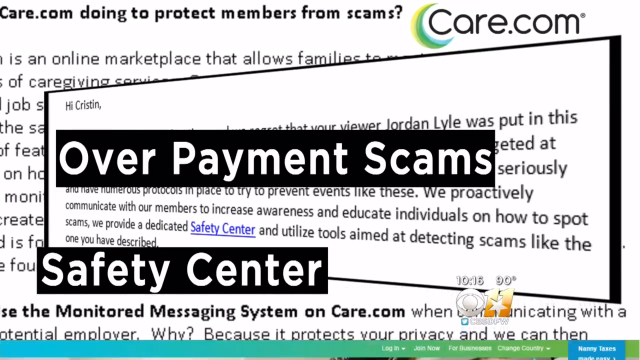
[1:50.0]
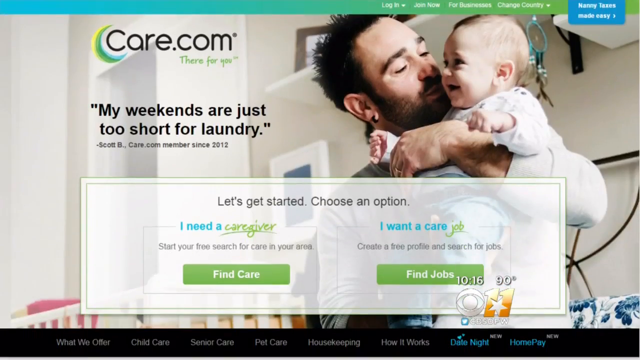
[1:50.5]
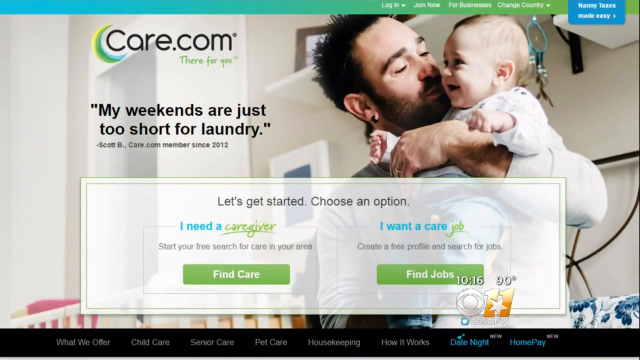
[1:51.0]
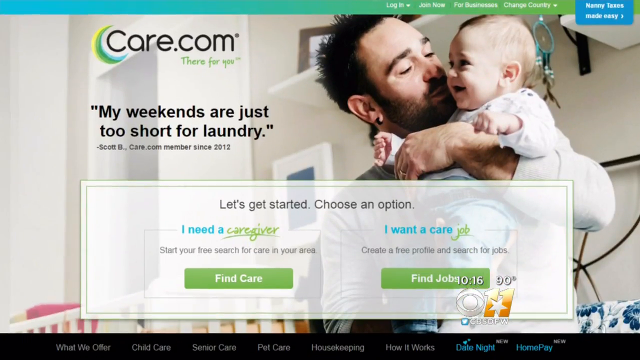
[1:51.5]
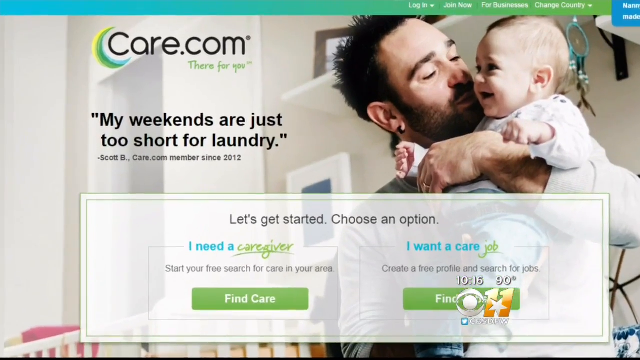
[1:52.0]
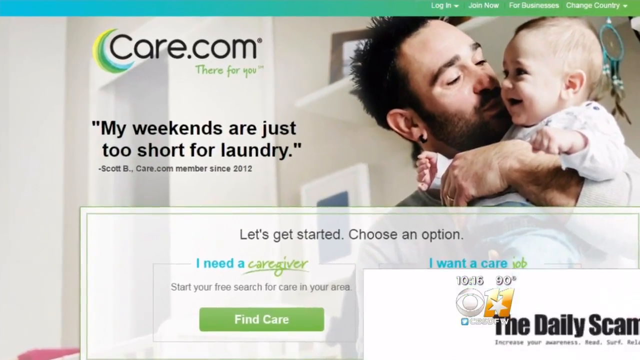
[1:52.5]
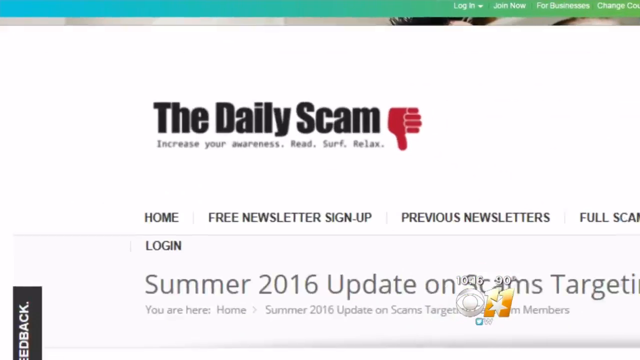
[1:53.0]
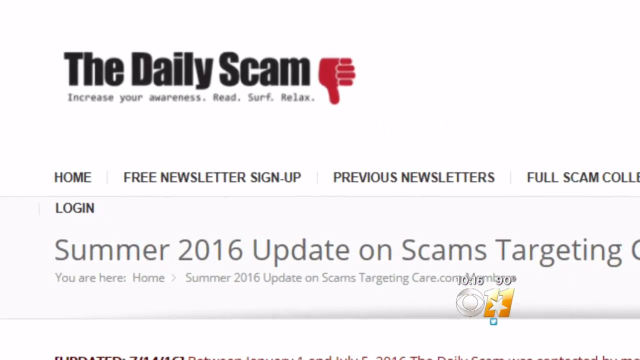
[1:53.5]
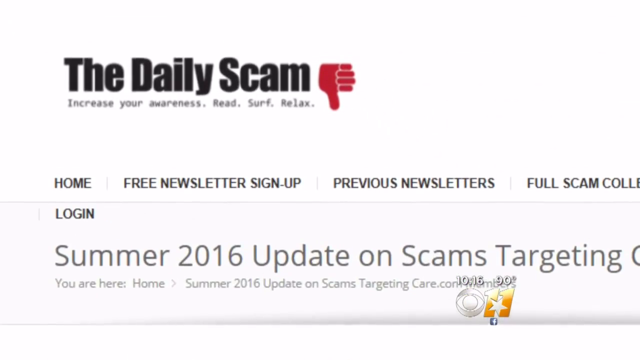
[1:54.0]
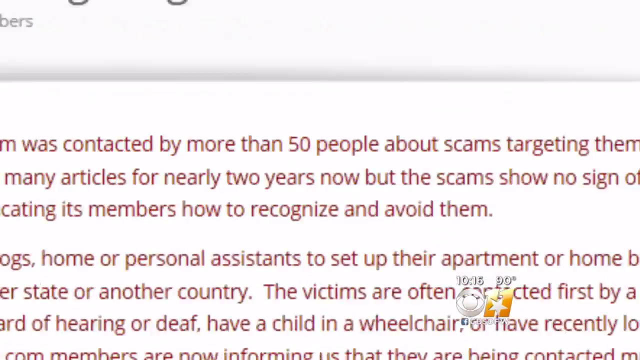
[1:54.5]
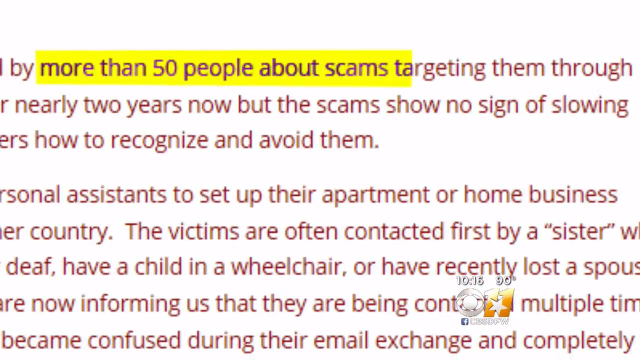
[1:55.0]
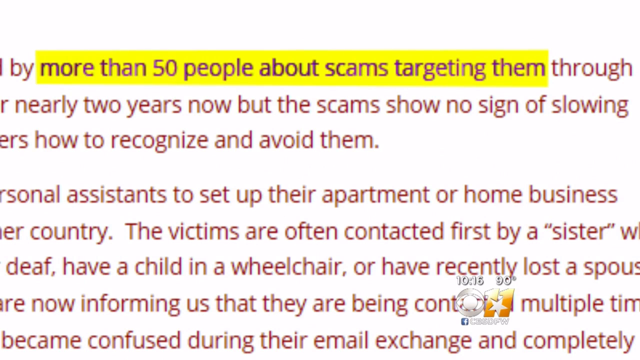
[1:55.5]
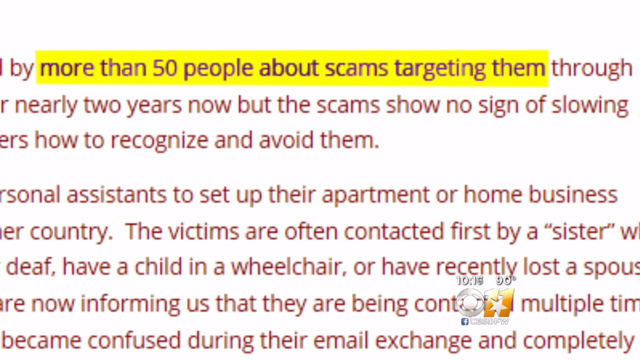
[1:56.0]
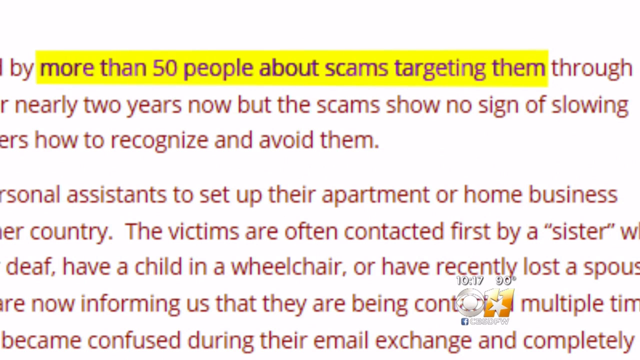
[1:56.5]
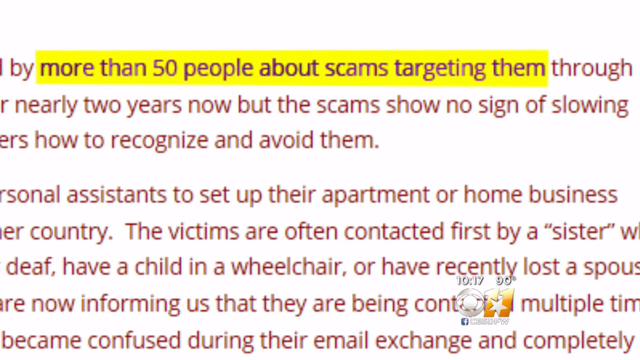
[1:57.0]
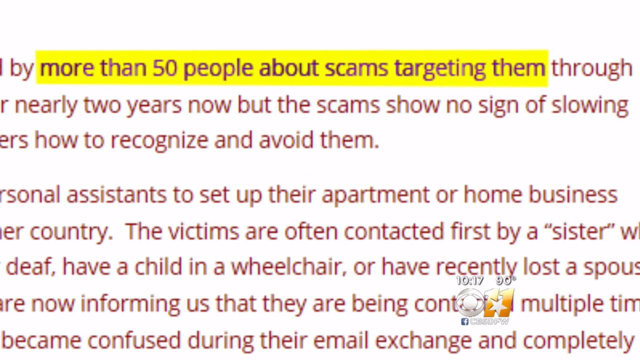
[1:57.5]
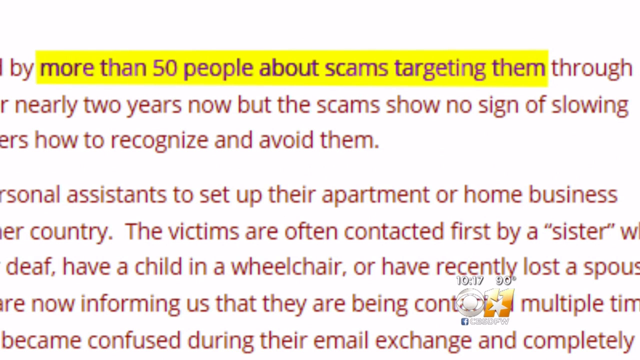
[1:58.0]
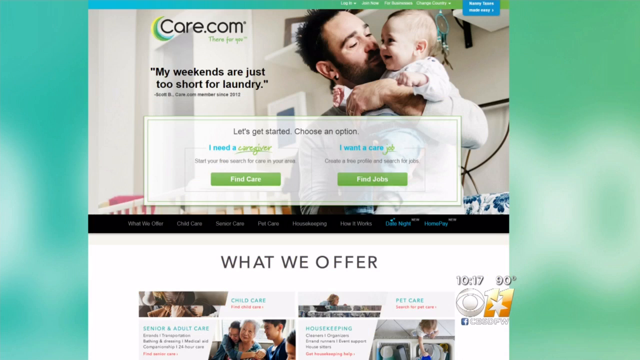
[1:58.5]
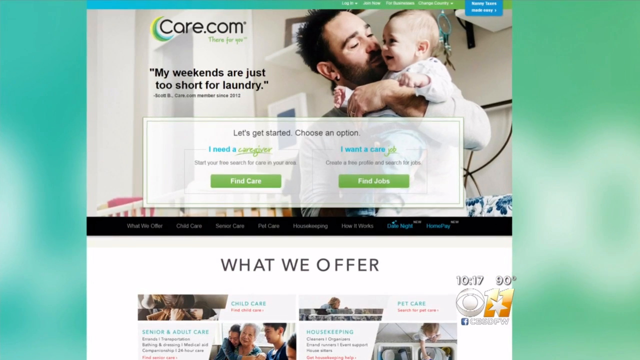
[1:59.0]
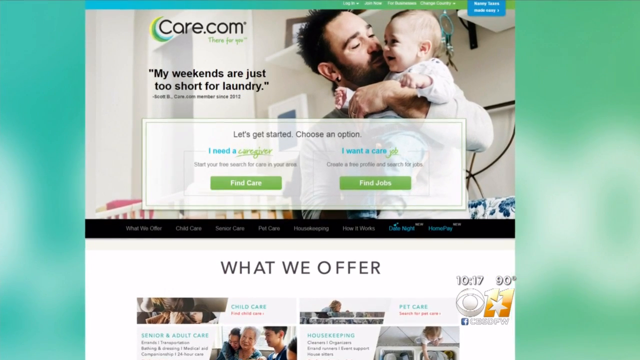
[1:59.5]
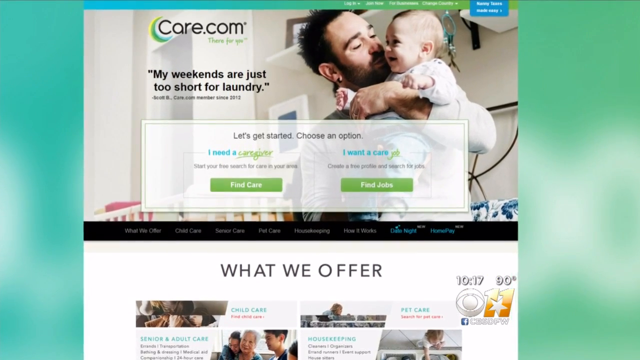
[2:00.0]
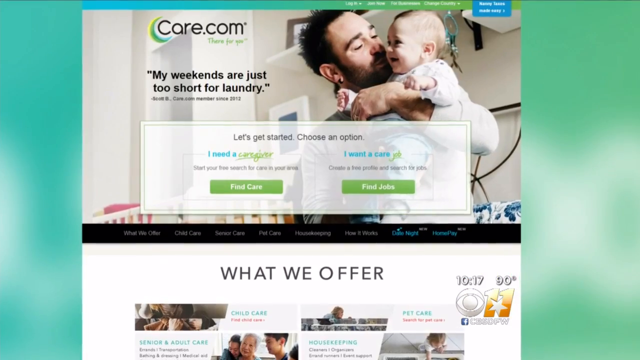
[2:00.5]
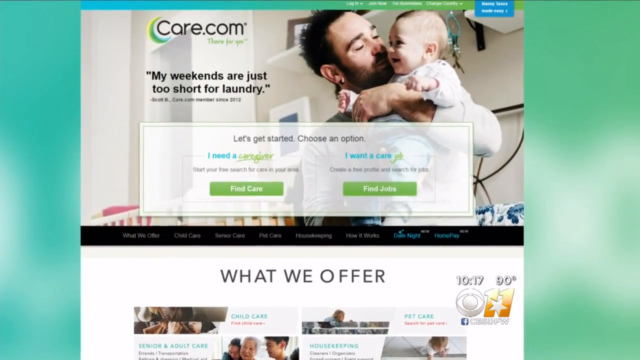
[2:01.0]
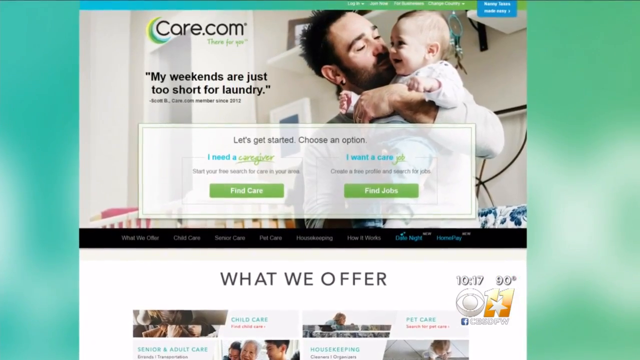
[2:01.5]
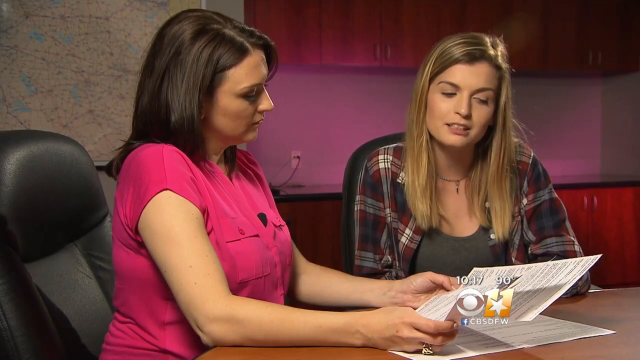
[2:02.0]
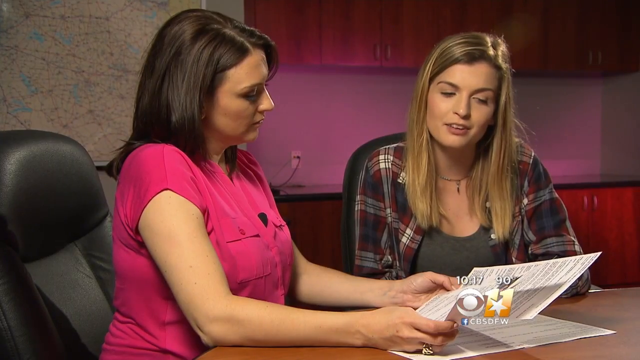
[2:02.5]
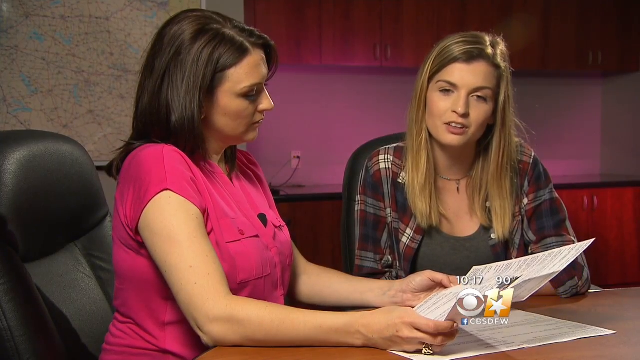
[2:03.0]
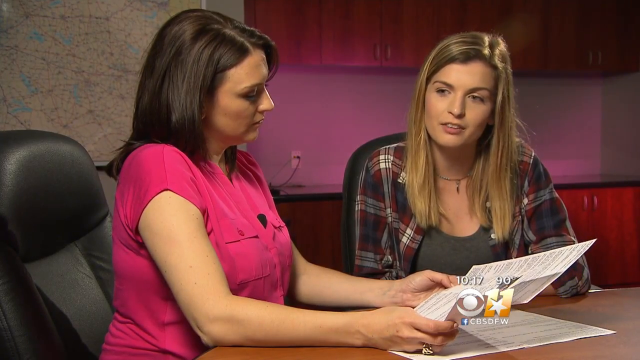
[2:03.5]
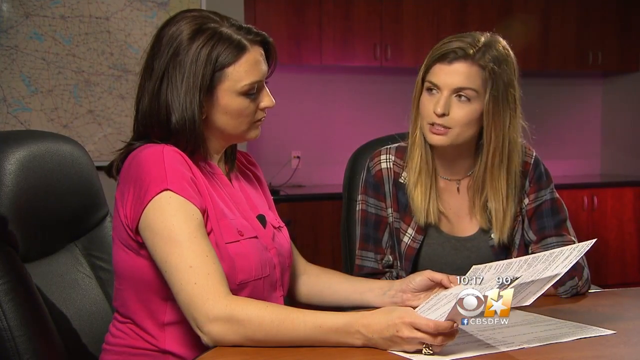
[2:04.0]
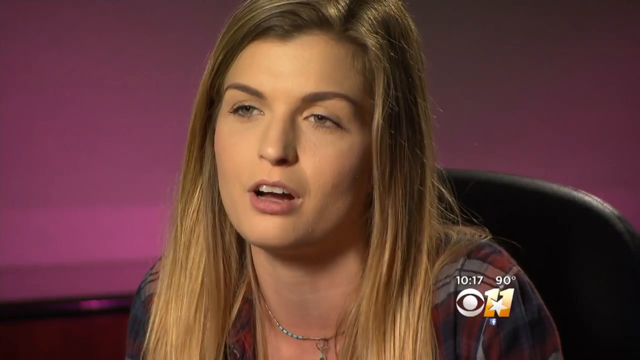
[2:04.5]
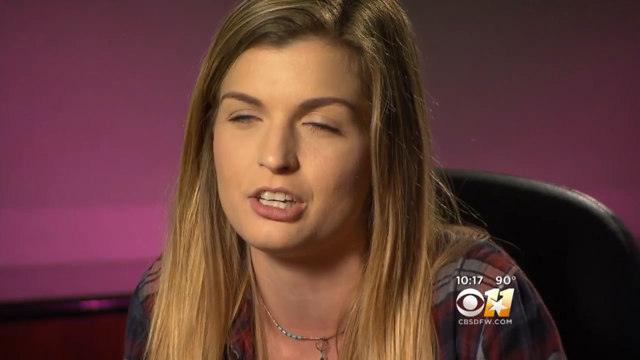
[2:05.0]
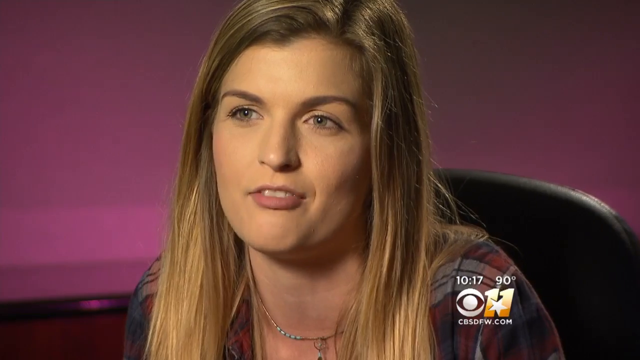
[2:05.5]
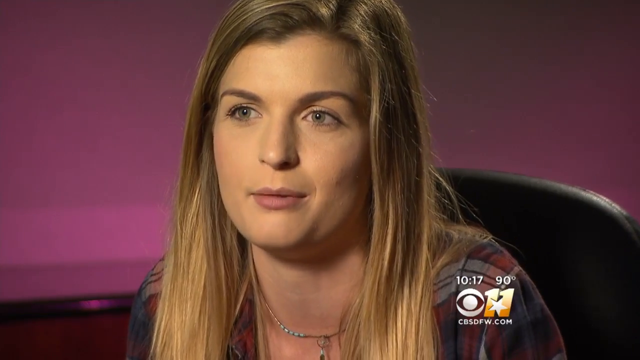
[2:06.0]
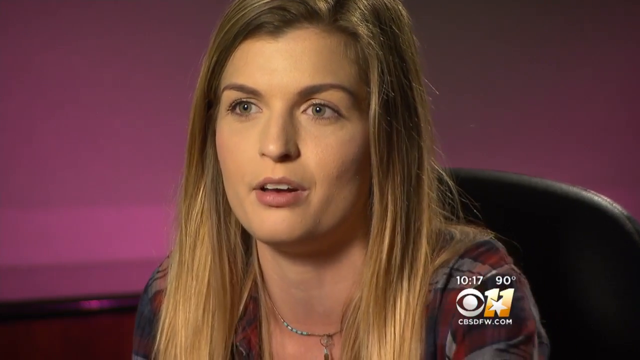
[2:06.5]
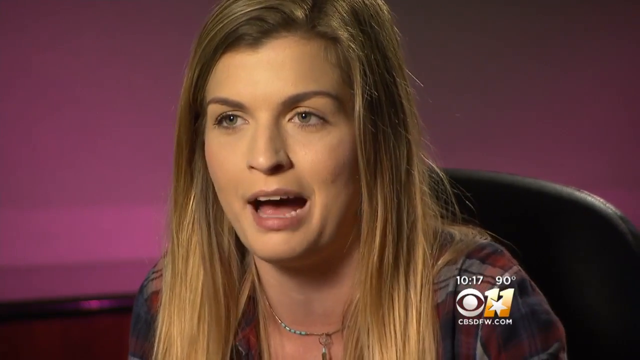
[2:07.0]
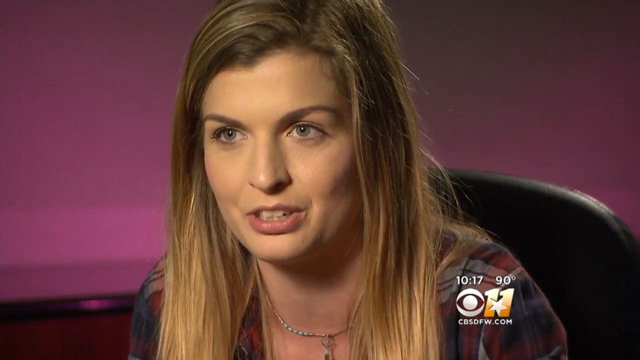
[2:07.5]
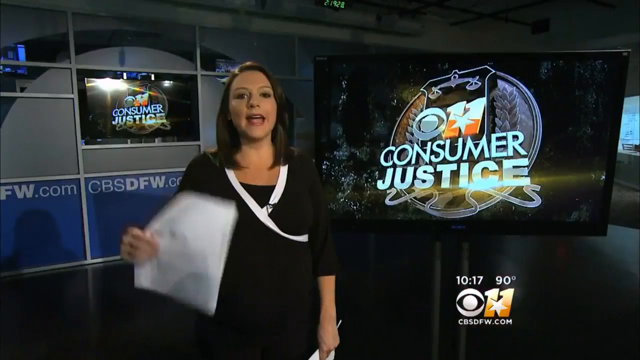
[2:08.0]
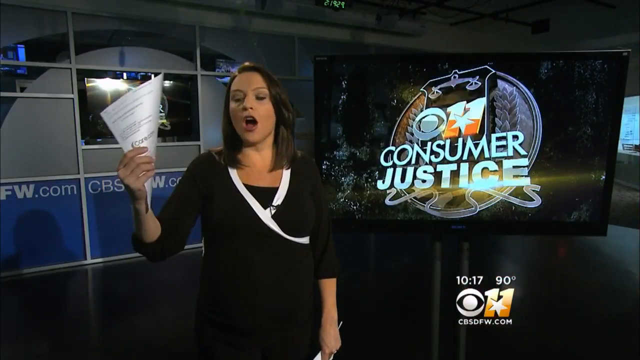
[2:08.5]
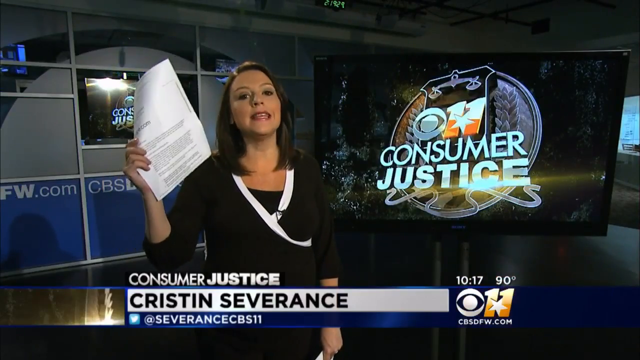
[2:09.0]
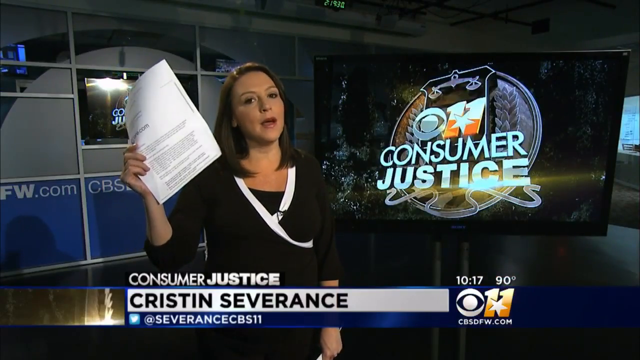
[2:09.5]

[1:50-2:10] Text on screen highlights overpayment scams, the safety center, and monitoring on care.com. A transition screen shows care.com with the text "my weekends are just too short for laundry. Let's get started. Choose an option. I need a caregiver. I want a care job." Information about scams follows. The video returns to the two females shown earlier, who talk about information shown on a piece of paper in front of them, and then returns to Consumer Justice with Kristen Servants in the CBS News-style coverage.